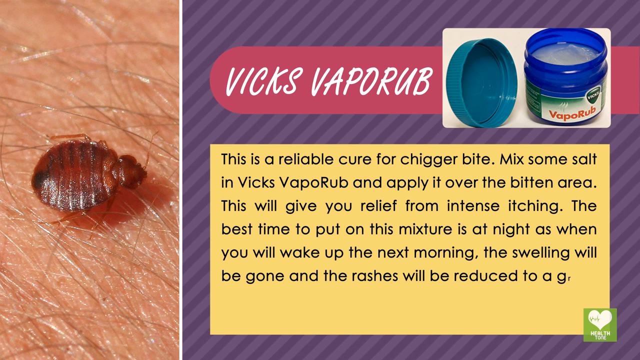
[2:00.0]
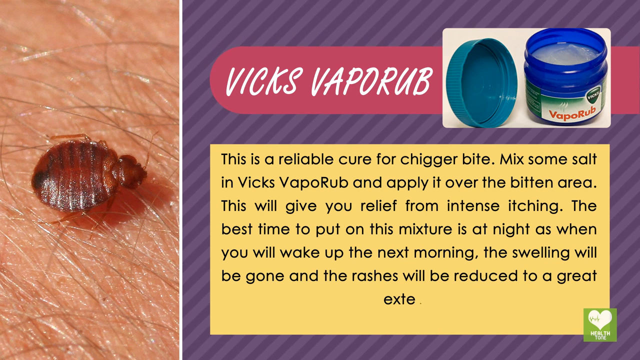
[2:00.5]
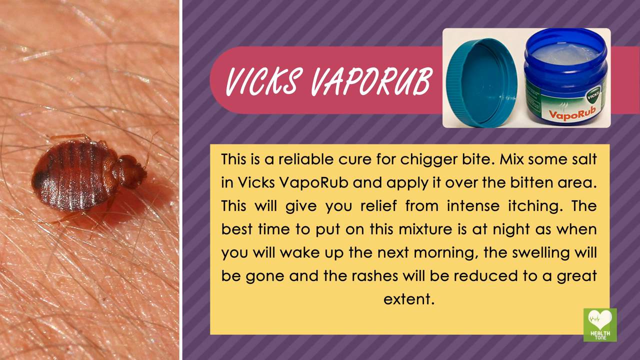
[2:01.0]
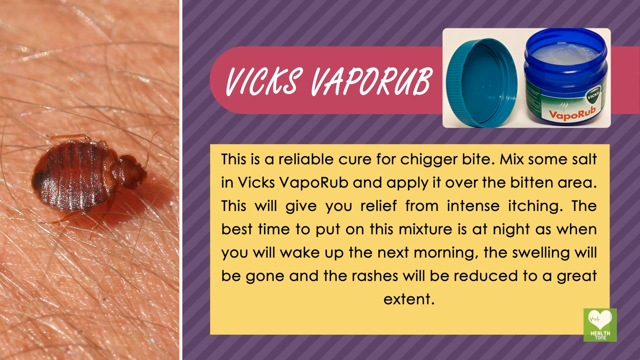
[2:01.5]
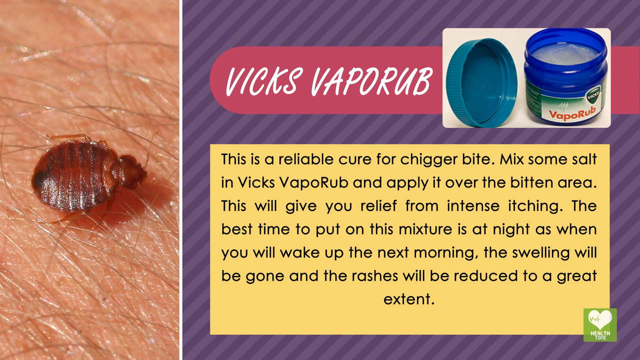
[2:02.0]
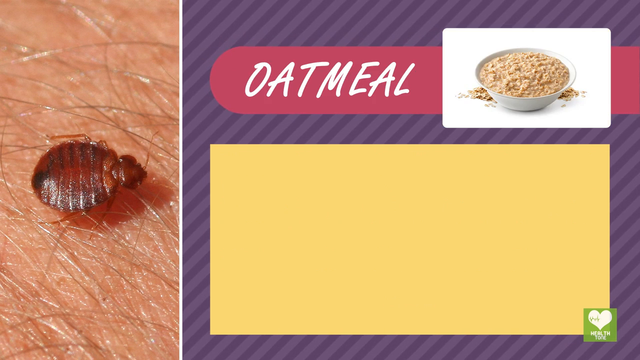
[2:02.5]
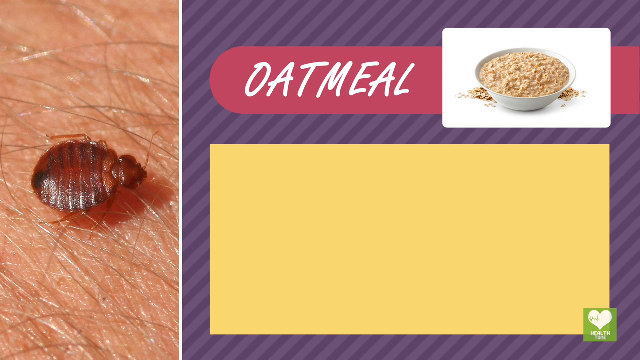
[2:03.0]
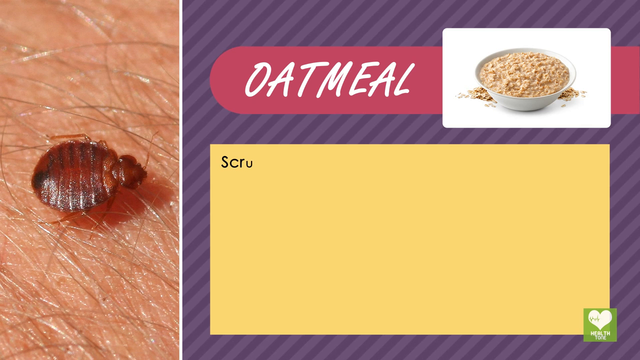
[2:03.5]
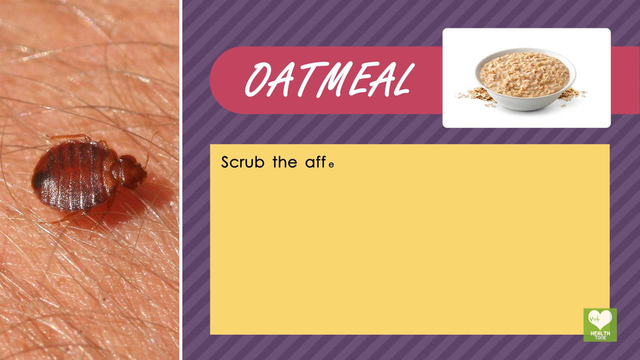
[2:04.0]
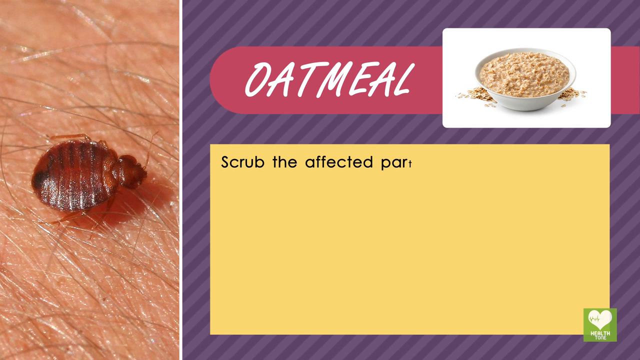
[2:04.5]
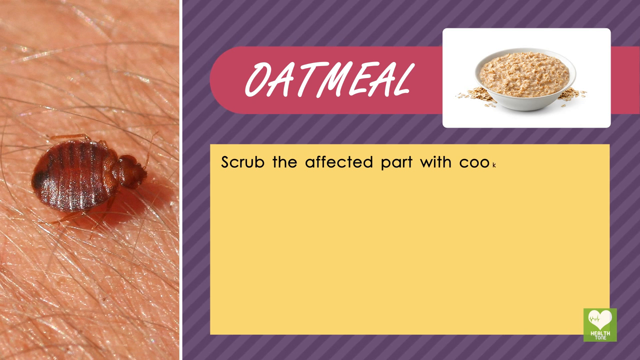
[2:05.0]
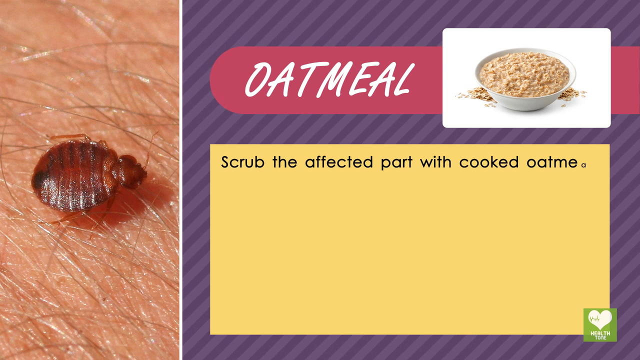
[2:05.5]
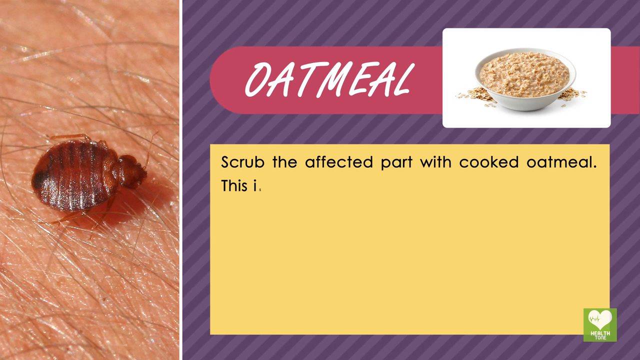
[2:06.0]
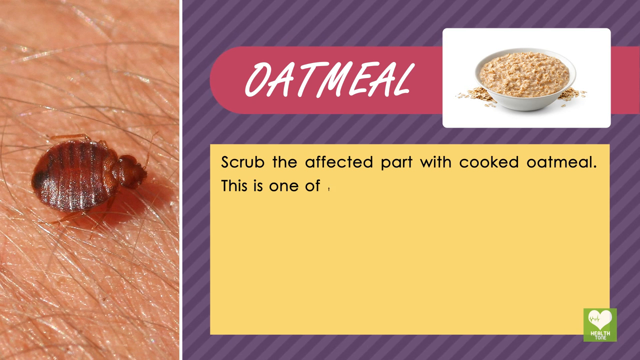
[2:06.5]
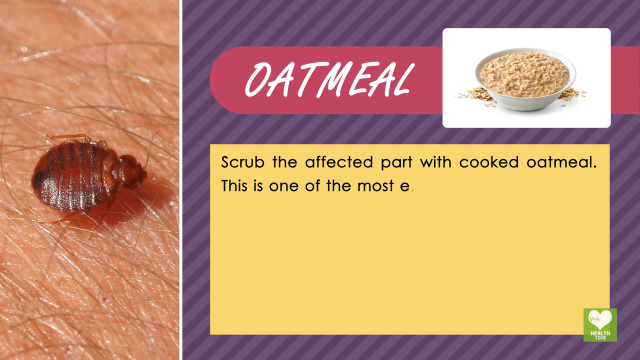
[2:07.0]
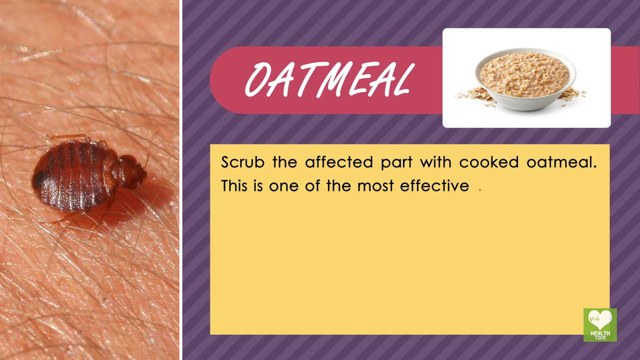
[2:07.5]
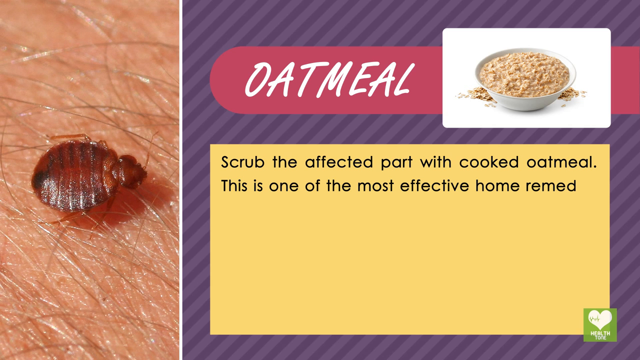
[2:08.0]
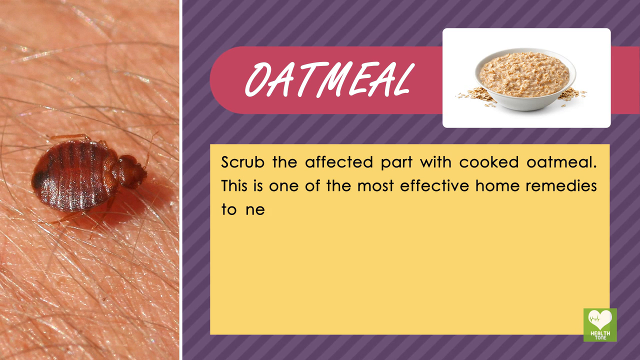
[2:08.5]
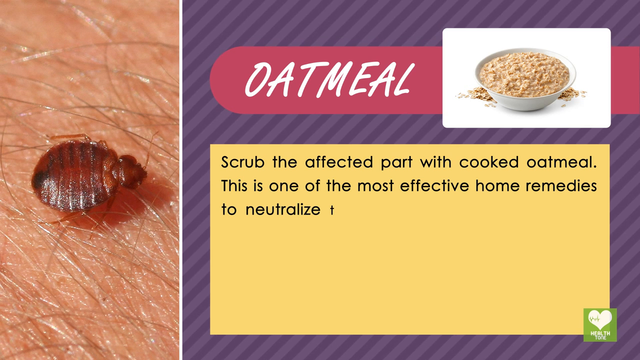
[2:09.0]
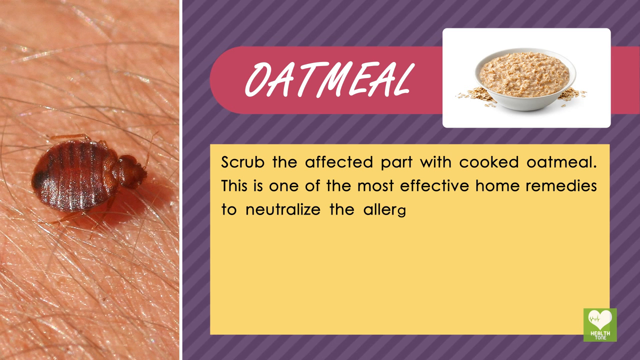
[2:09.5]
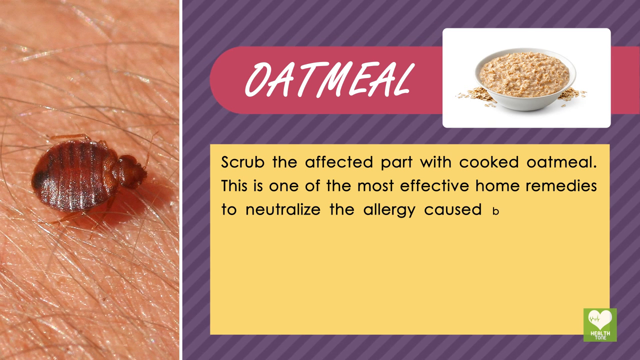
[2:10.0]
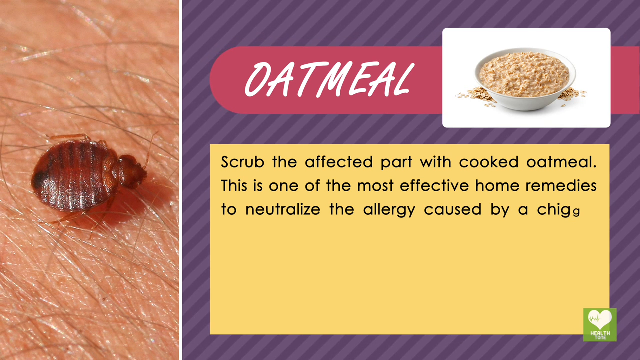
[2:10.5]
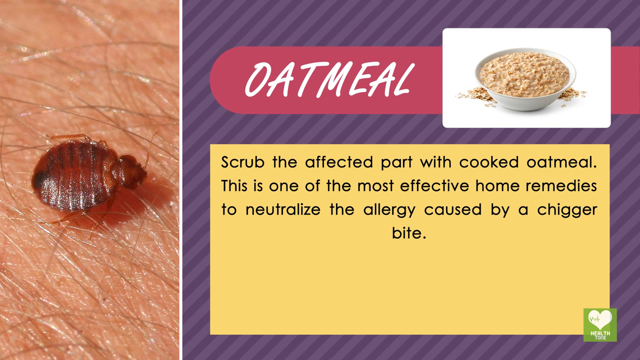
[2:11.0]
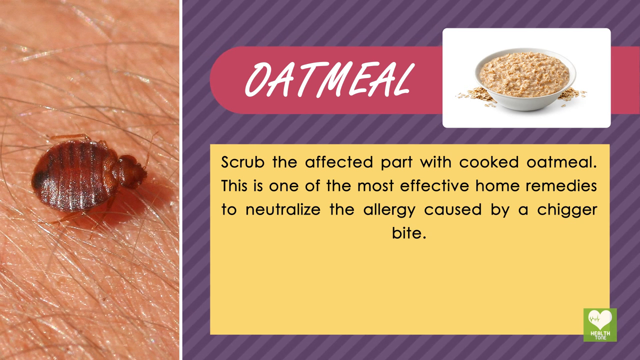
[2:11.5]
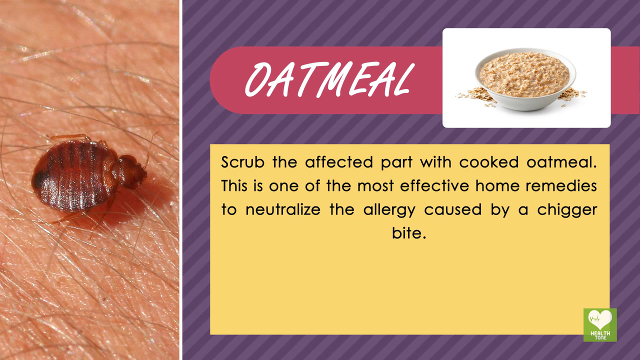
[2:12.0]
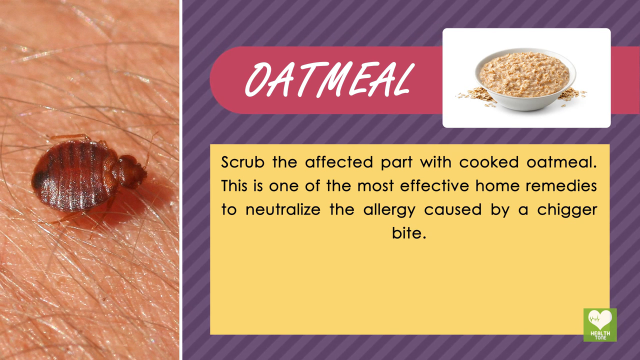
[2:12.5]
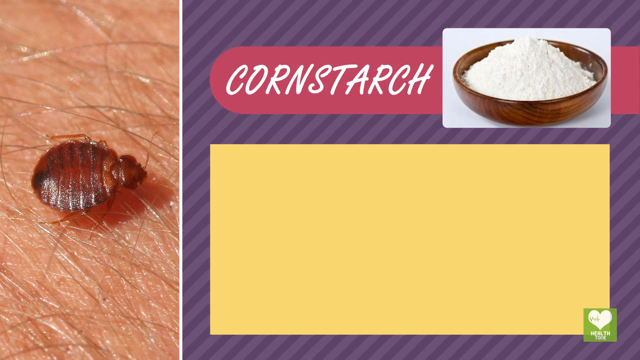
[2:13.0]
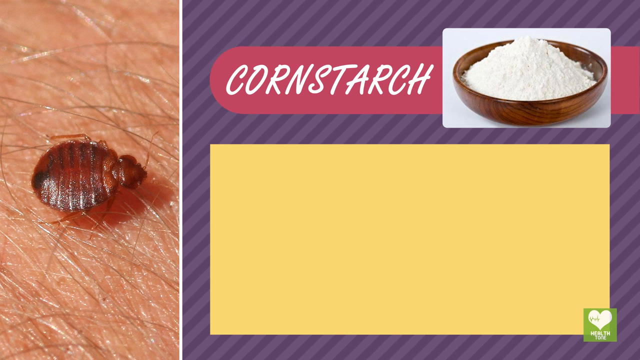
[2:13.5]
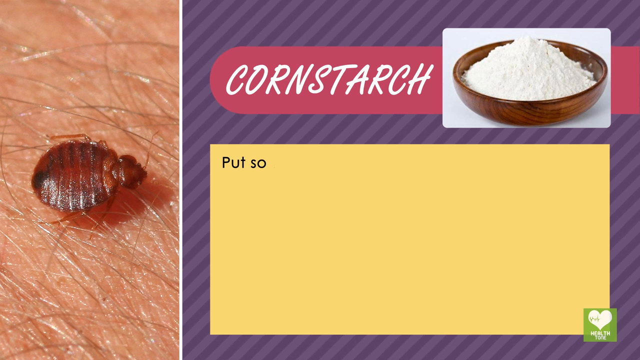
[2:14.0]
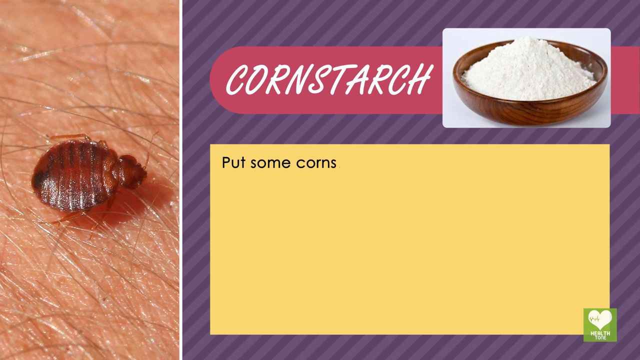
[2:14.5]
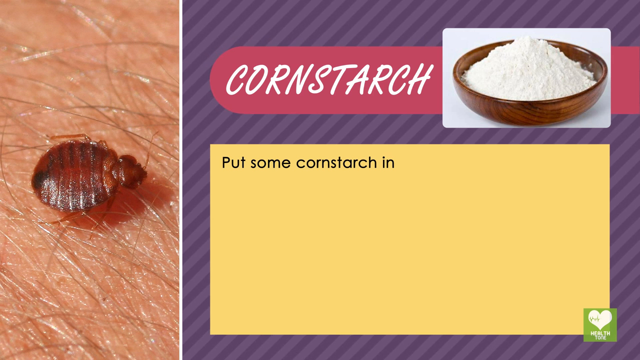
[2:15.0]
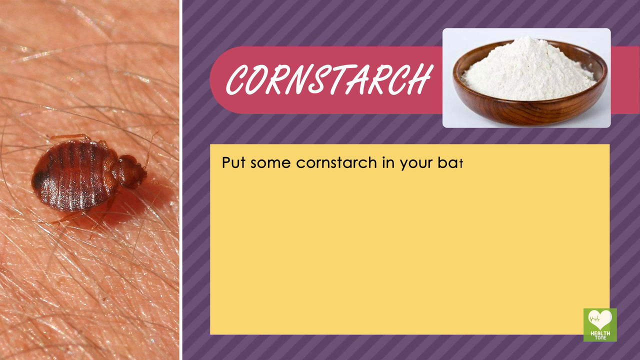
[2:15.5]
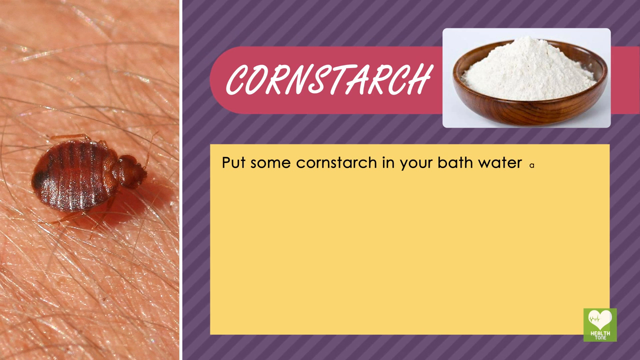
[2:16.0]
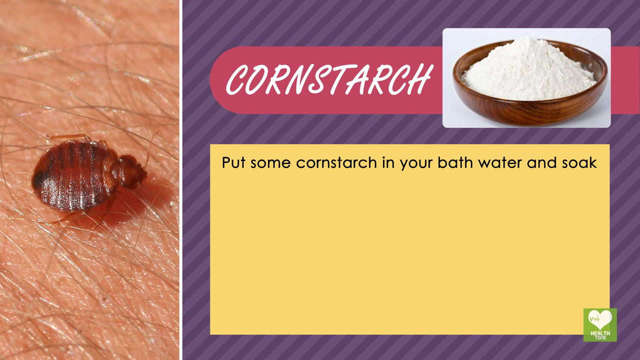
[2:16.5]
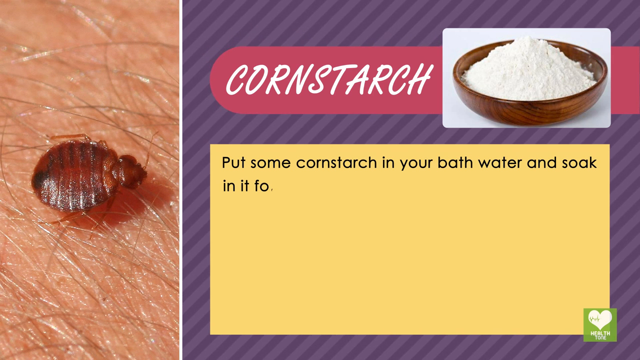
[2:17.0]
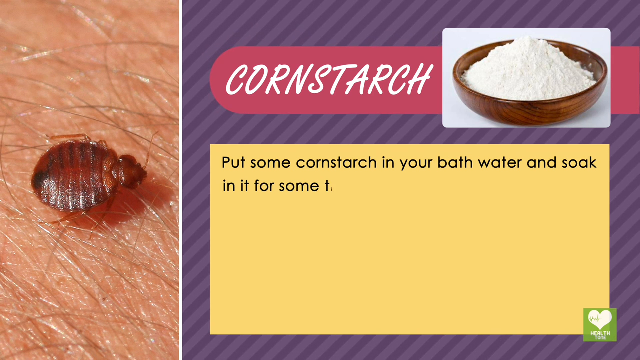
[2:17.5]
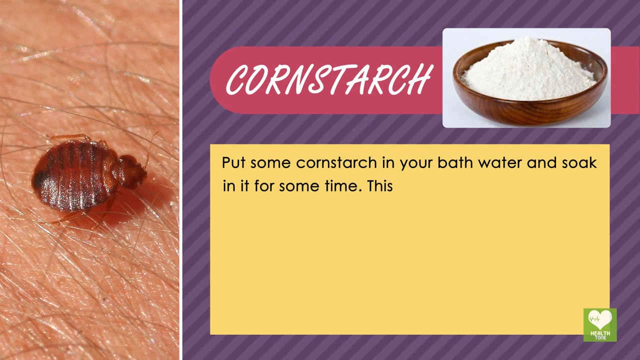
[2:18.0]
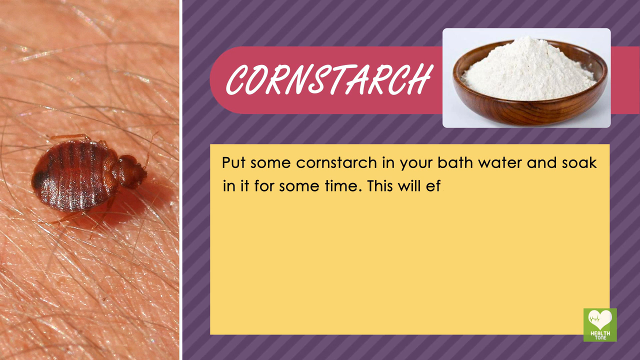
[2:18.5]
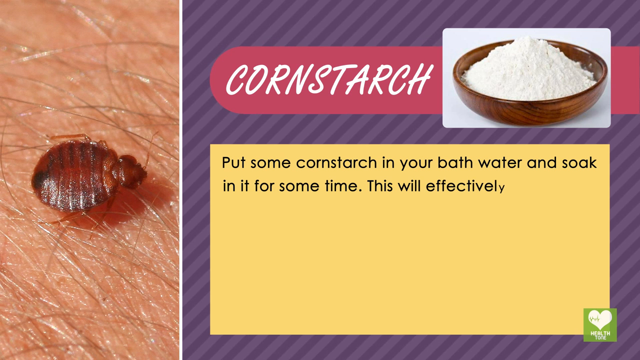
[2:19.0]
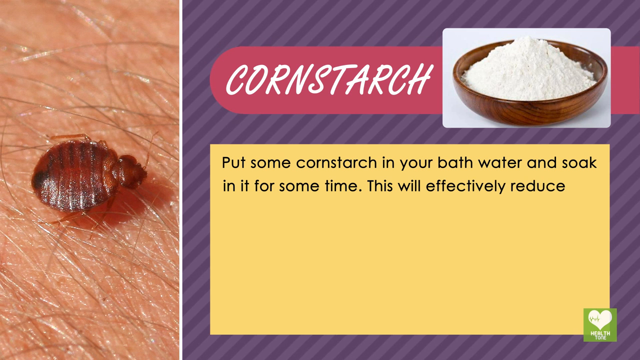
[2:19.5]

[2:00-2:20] The next remedy is oatmeal, written in the header. Directly to the left of the text is a white bowl of freshly cooked oatmeal that looks like porridge, with a few loose oats scattered behind it. The instructions in the yellow text box below say: "scrub the affected part with cooked oatmeal. This is one of the most effective home remedies to neutralize the allergy caused by a chigger bite." The next remedy is cornstarch, with "cornstarch" written in all caps in the handwritten font in the header box. To its right is a wooden bowl that appears to be a dark wood, maybe some type of mahogany or acacia, shiny and rich-looking, holding a little mountain of white cornstarch powder. The instructions in the yellow box read: "put some cornstarch in your bath water and soak in it for some time. This will effectively reduce the soreness."